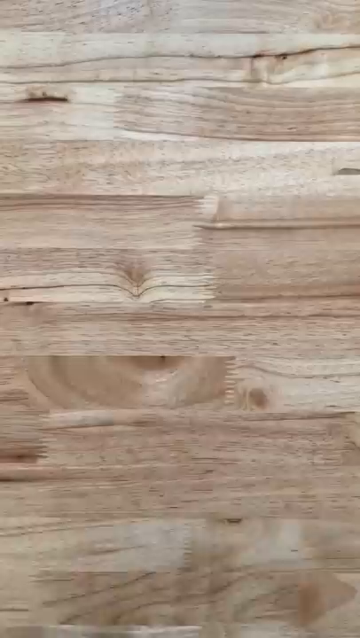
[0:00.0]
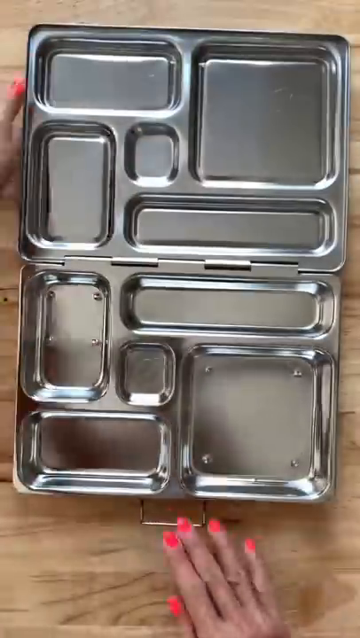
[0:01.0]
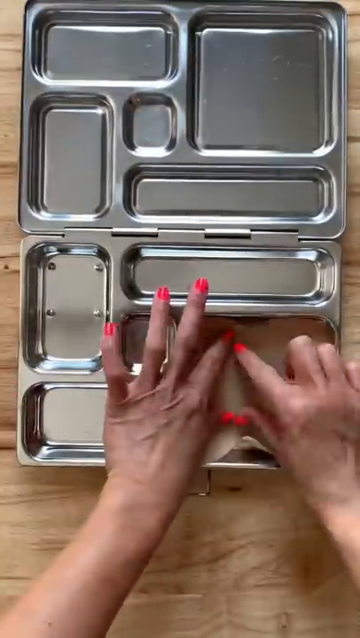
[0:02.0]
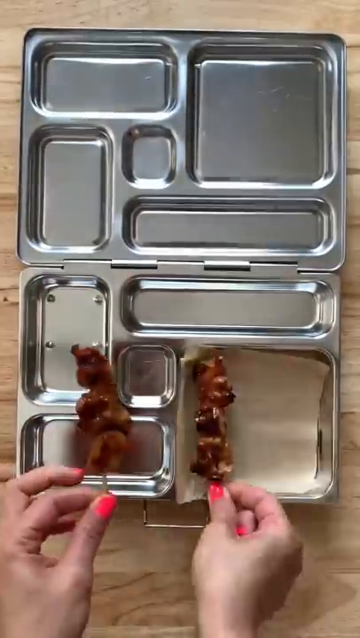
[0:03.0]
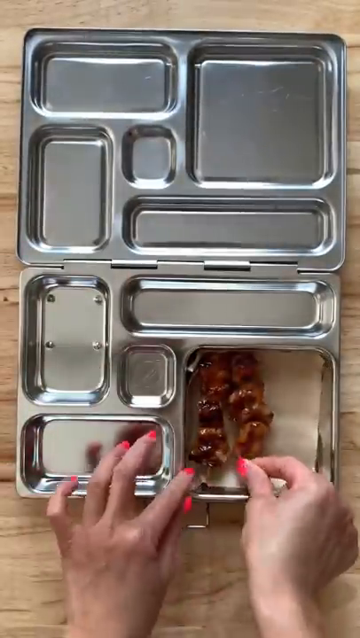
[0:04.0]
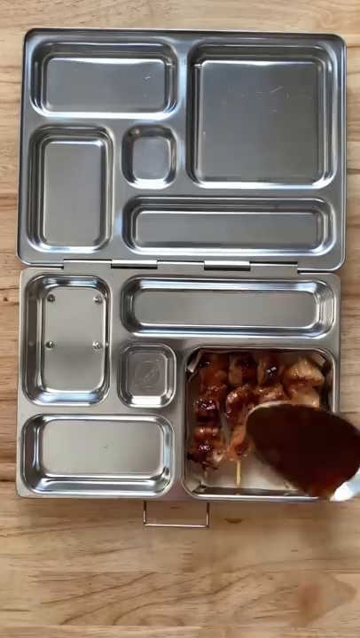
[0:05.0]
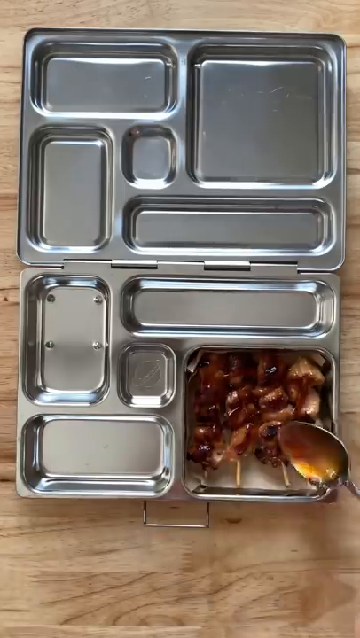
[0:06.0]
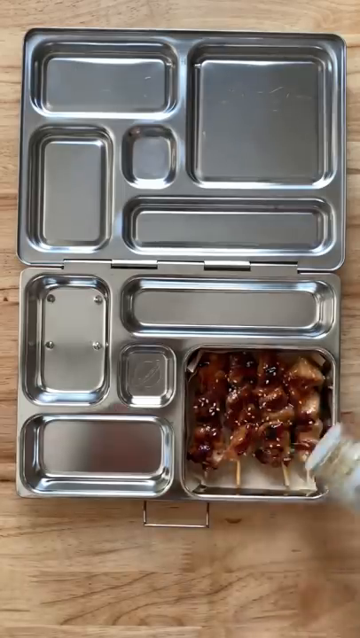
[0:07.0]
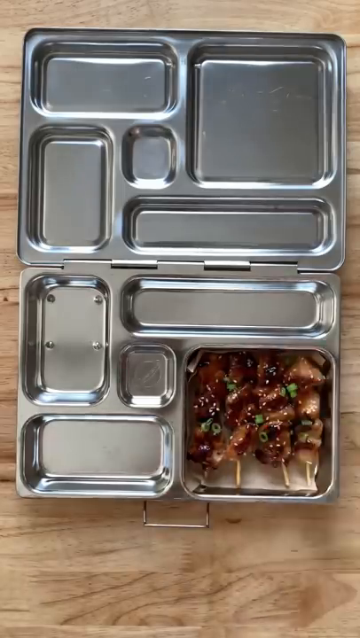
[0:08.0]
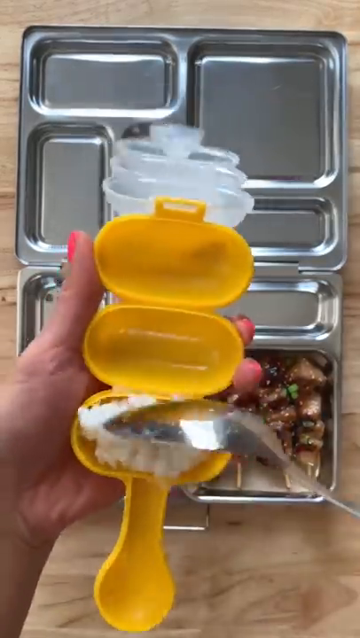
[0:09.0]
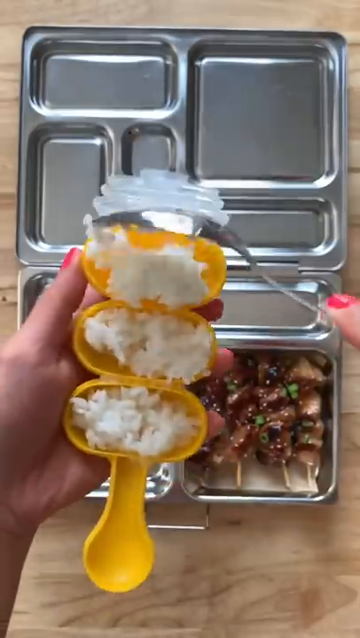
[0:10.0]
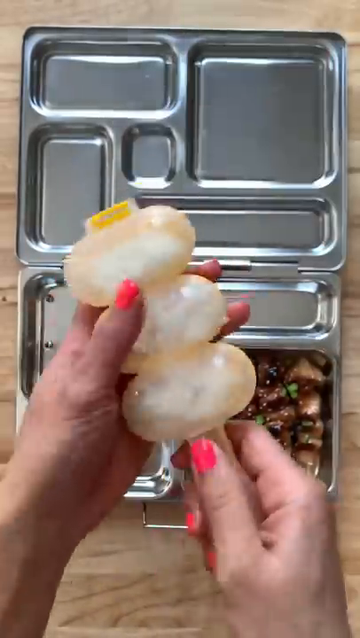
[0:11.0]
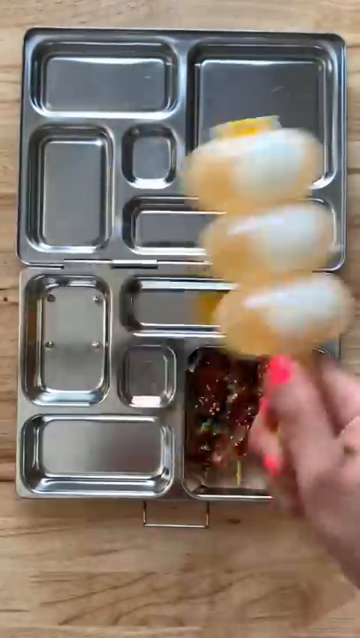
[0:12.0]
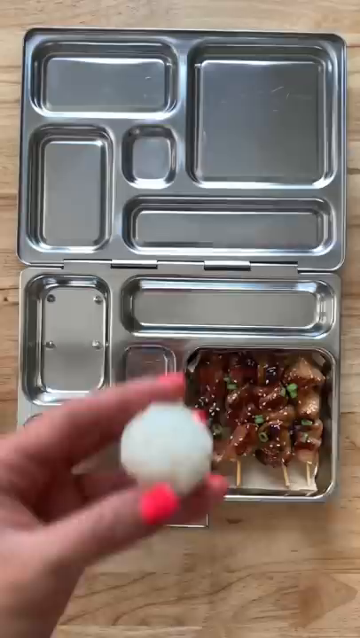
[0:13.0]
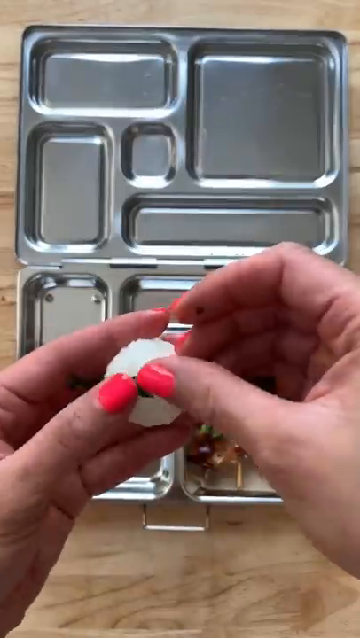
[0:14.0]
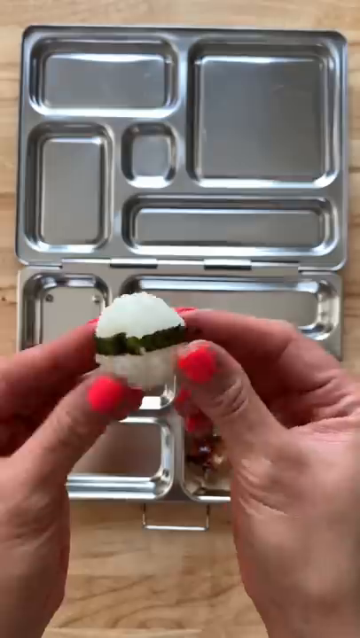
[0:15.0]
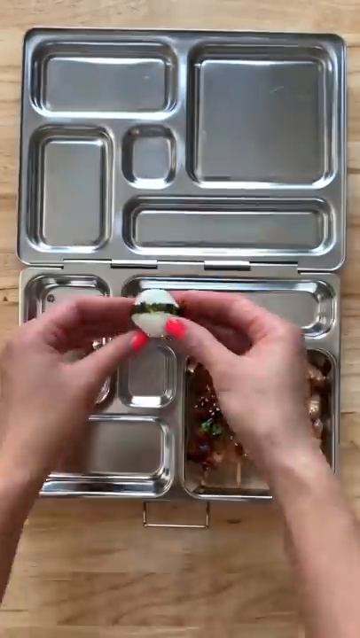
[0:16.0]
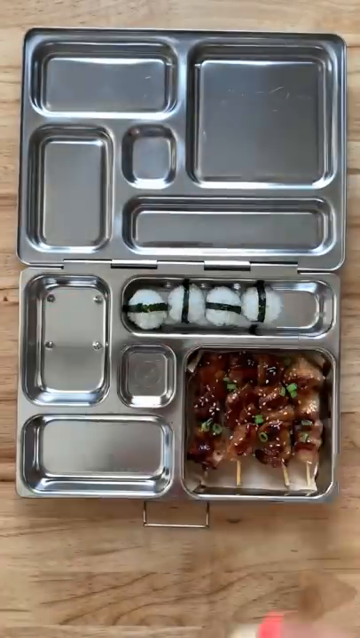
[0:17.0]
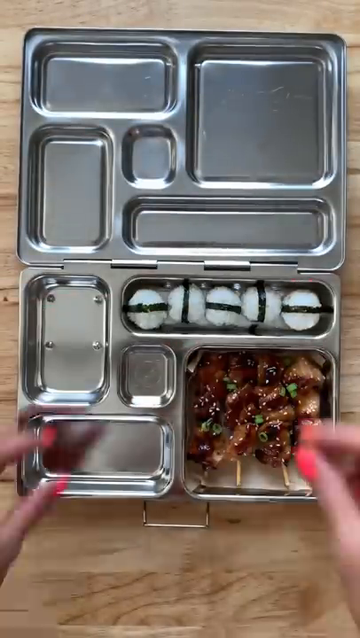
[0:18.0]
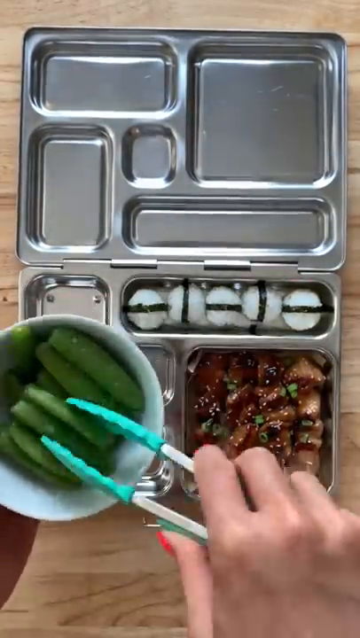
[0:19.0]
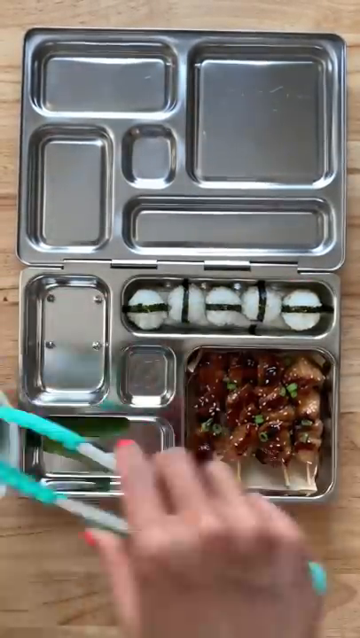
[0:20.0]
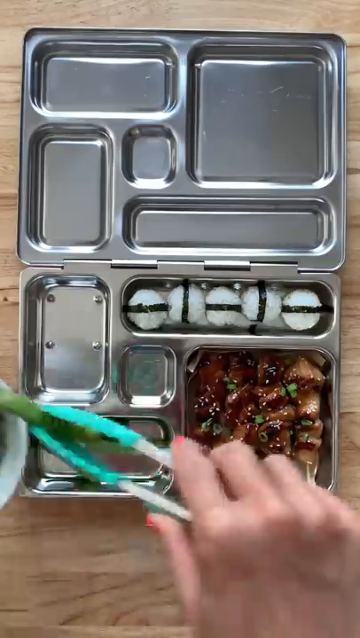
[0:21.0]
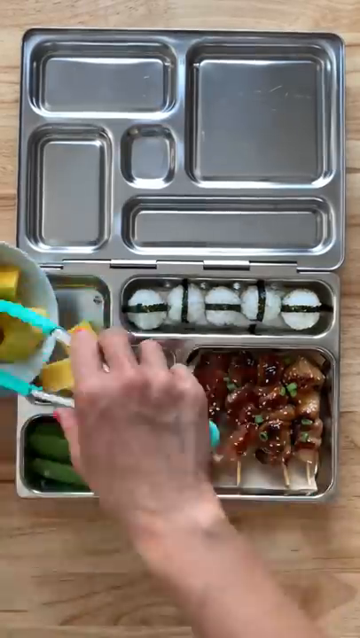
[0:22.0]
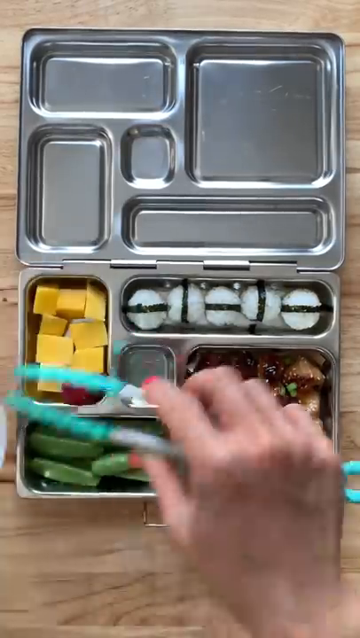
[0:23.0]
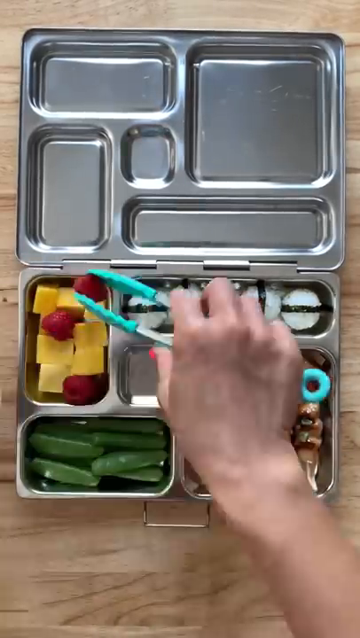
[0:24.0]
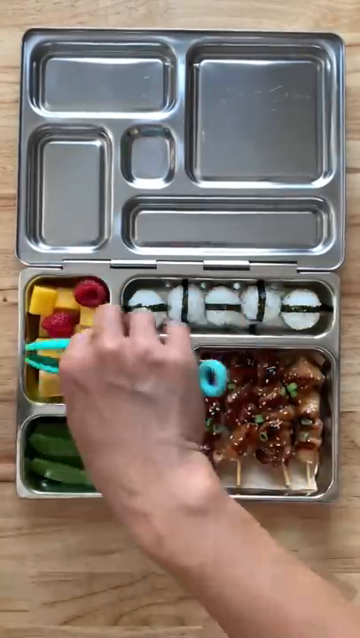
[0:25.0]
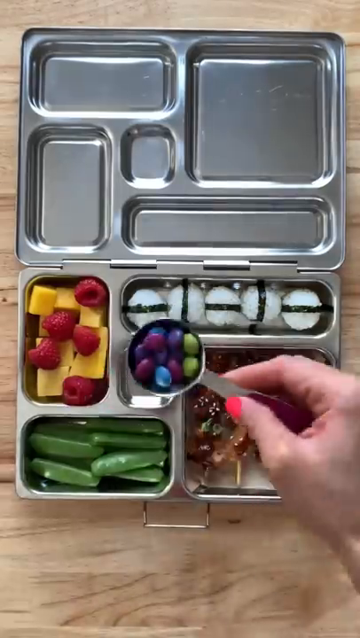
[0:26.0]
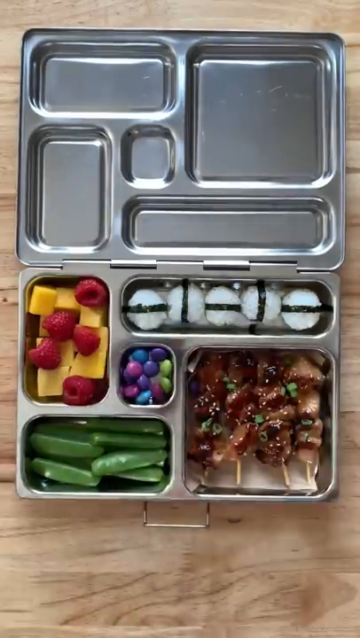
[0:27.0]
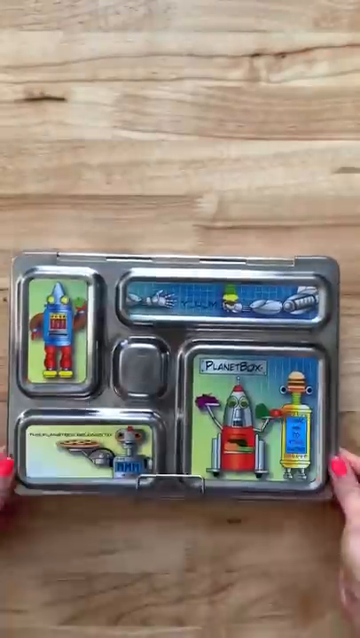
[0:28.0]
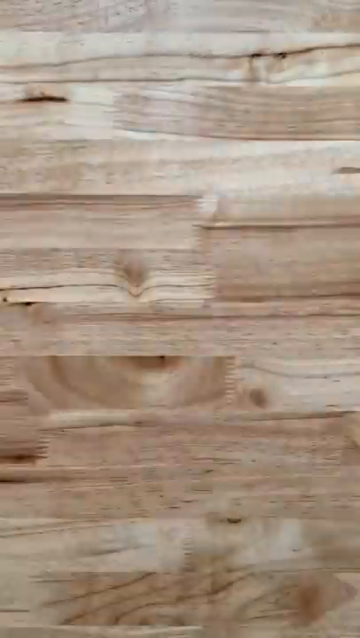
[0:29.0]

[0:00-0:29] A silver metal lunchbox with different compartments is shown. In the bottom right of the lunchbox, meat sticks are being added by a person wearing pinkish or reddish nail polish. After adding the meat sticks to this area, they add some sauce and some peppers or a kind of garnish to it. Next, a yellow apparatus is grabbed, and what looks like white rice is added to it. The apparatus has three little compartments, which are then shaken, turning the rice into little white rice balls. Some kind of little garnish is added around the rice balls, and they are then added into the lunch tray. After this, there is a bowl containing green beans or a type of vegetable, and tongs take the green beans out and add them to the lunch tray. Next comes a white bowl holding some kind of yellow fruits, which are taken from the bowl with tongs and put into the silver tray. Red berries are also added, and finally what look like M&Ms are added as dessert.